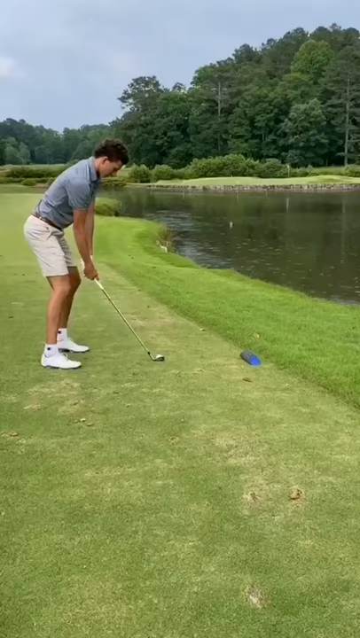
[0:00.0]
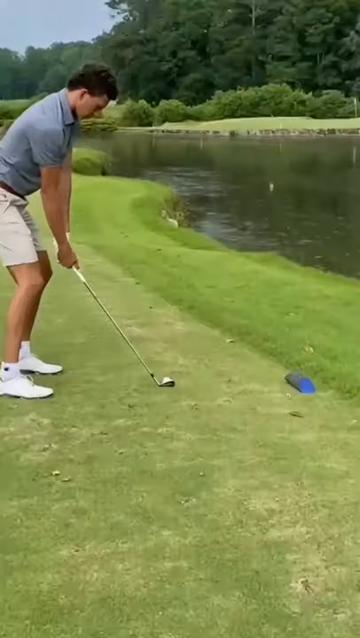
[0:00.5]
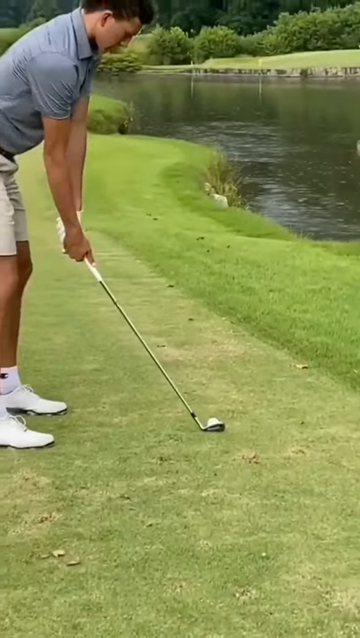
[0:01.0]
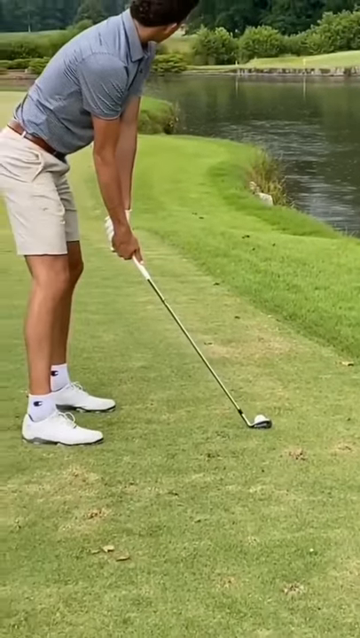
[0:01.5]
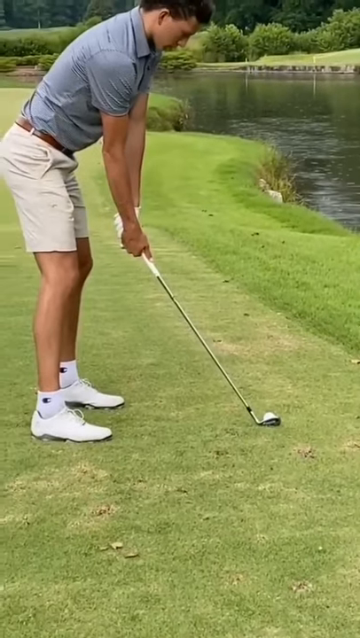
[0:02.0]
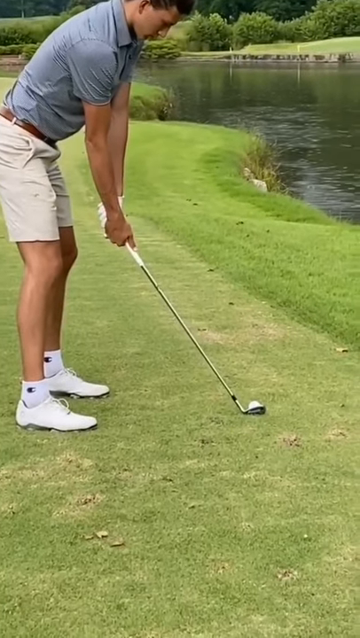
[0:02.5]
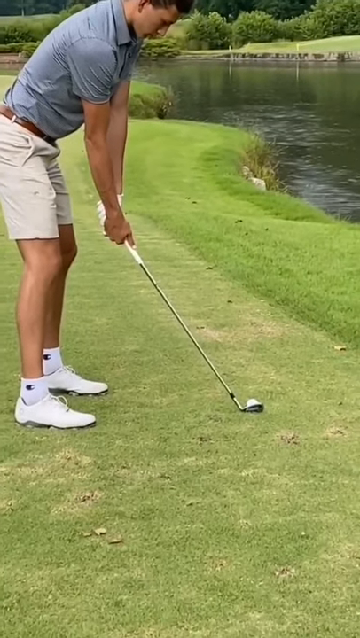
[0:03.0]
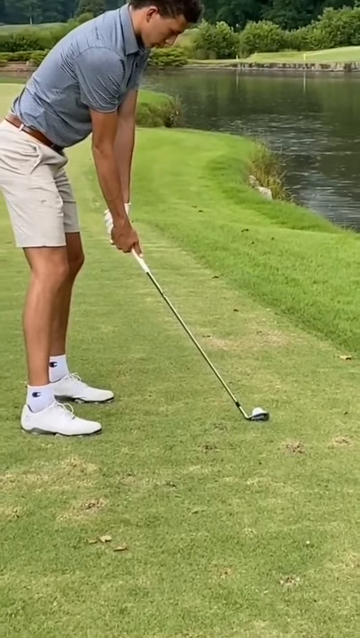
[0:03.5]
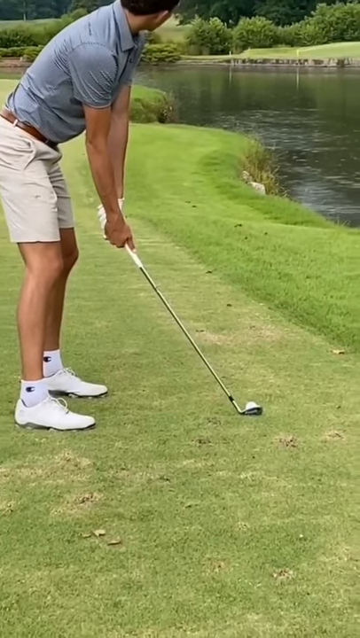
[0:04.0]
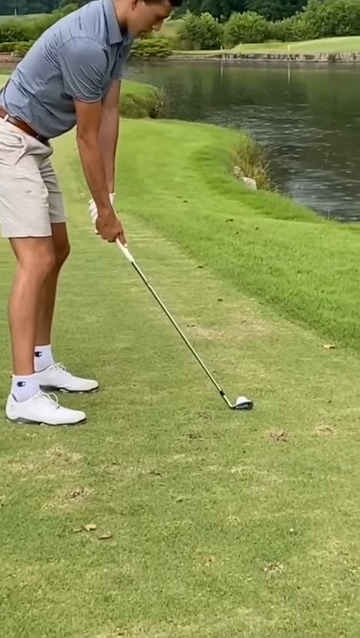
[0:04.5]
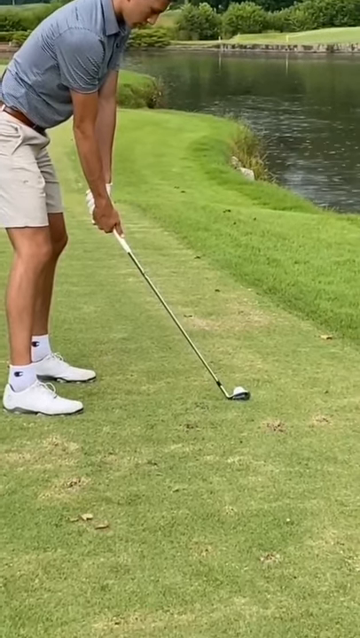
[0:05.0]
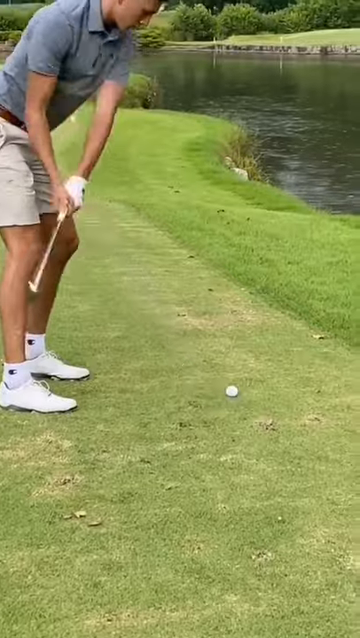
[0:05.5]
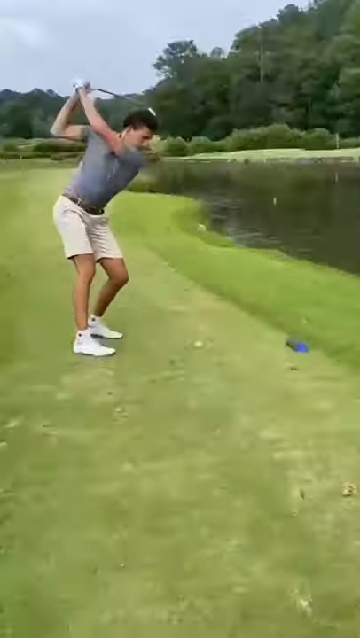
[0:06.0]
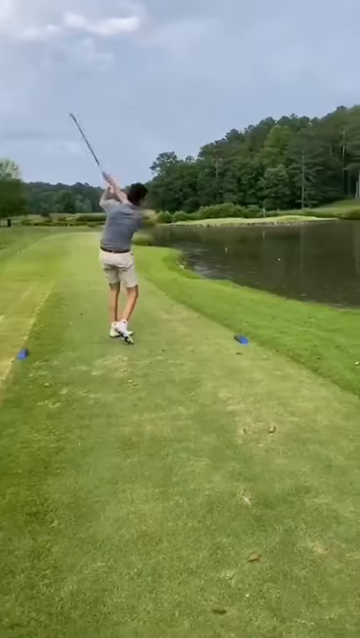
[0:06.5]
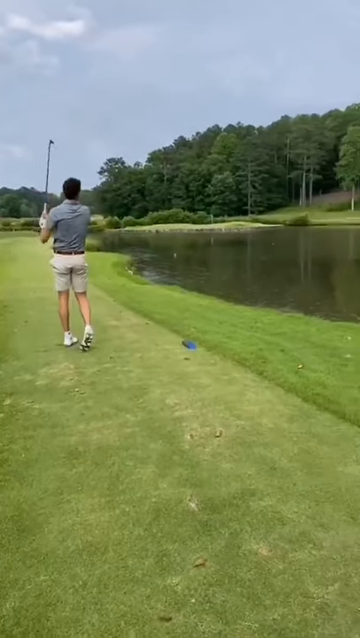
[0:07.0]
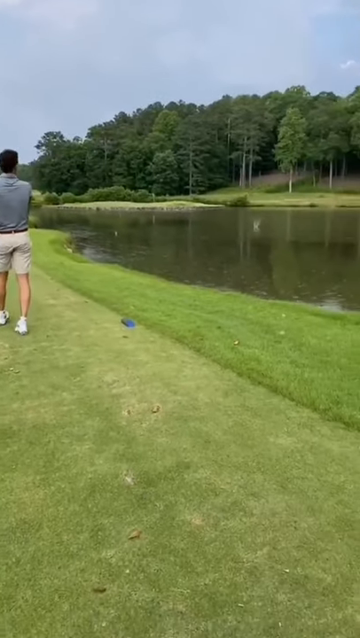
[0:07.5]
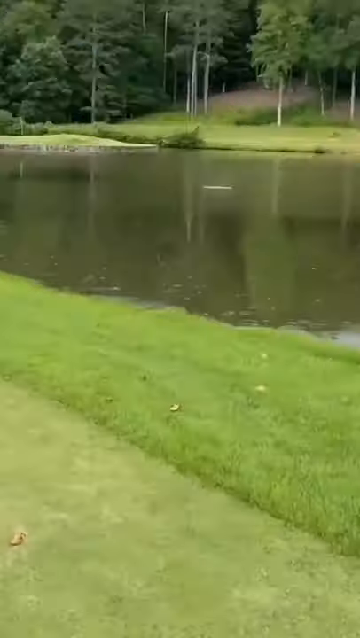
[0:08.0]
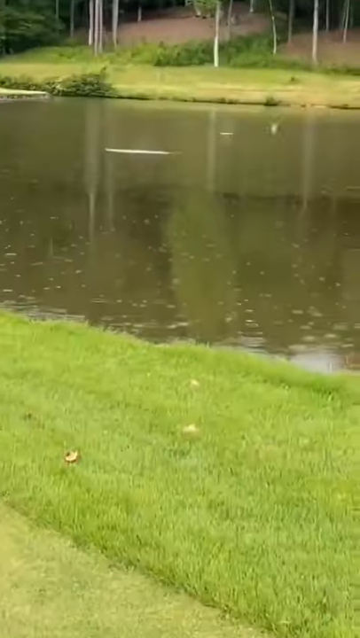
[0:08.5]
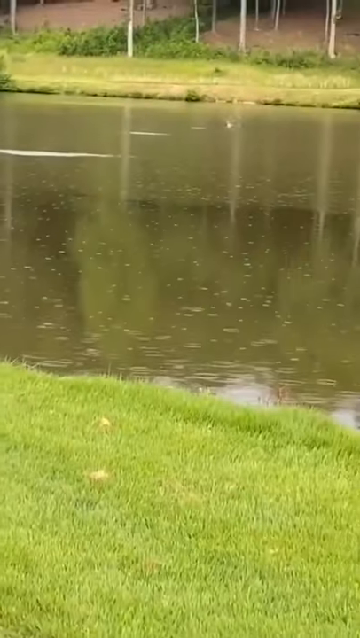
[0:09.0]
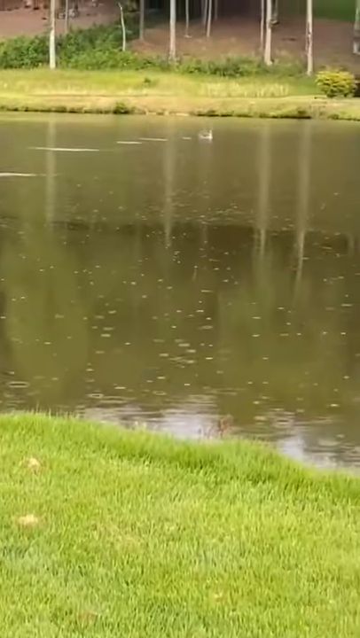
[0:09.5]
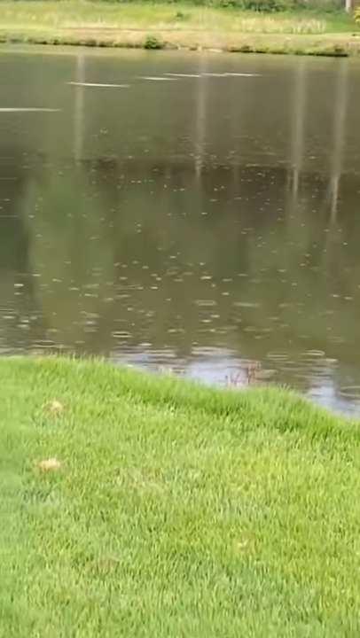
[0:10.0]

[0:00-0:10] The video is titled "Skips, it's pretty impressive tho" with a googly-eyed emoji, and "#shorts" appears at the top. A golfer uses an iron to hit a ball across a body of water, aiming diagonally along its length, apparently to get further across it. The ball skips across the water five times and then sinks into the water on the sixth. He is standing on the fairway on slightly shorter grass, right beside a strip of thicker grass that borders the water, apparently about four or five feet wide.